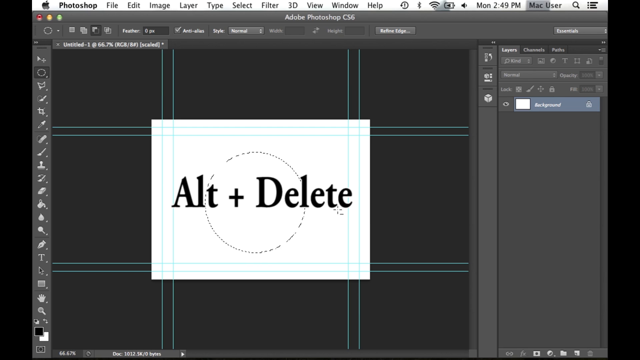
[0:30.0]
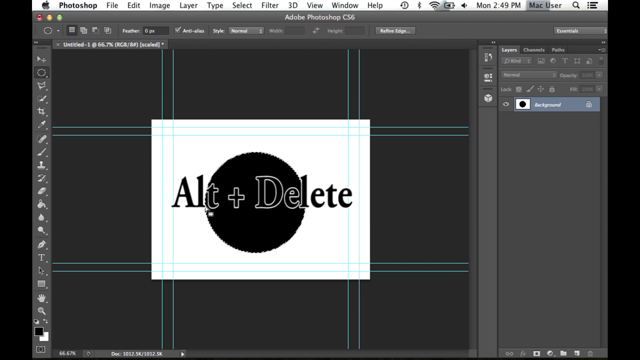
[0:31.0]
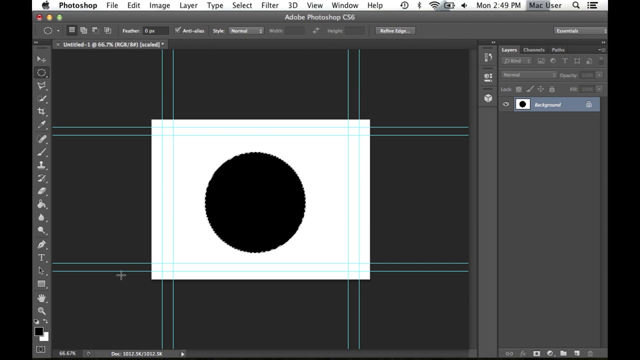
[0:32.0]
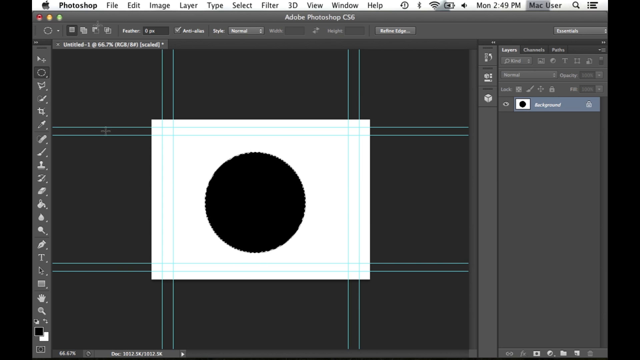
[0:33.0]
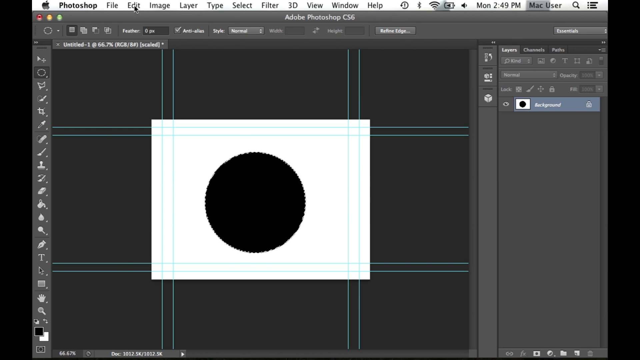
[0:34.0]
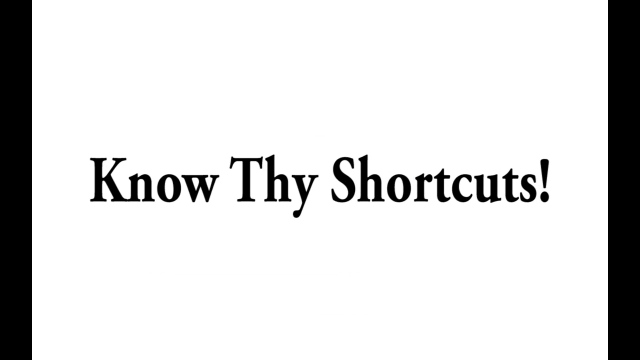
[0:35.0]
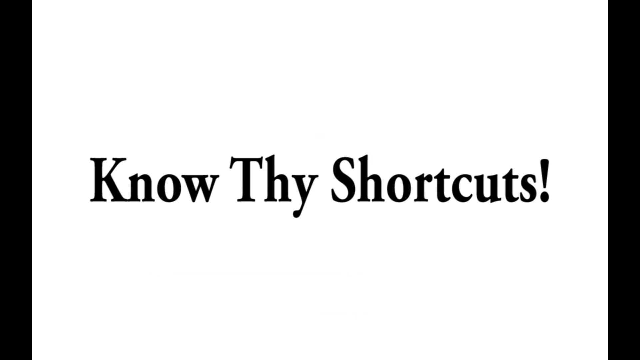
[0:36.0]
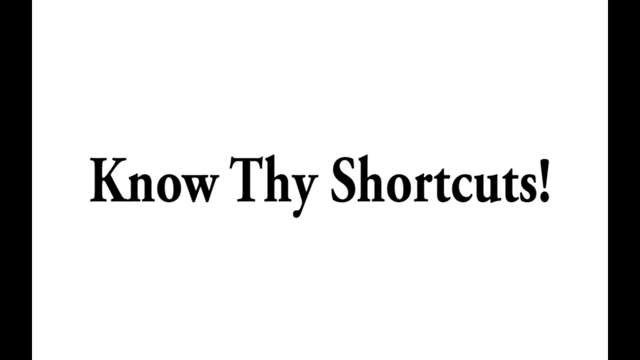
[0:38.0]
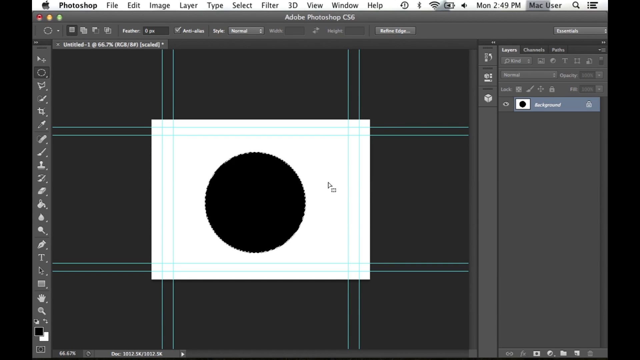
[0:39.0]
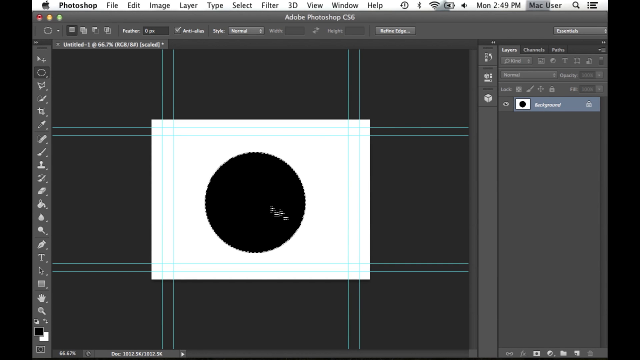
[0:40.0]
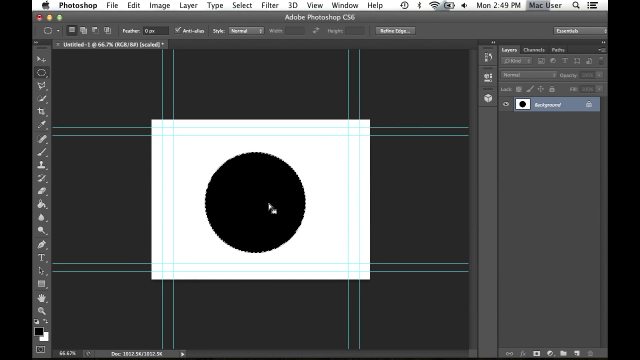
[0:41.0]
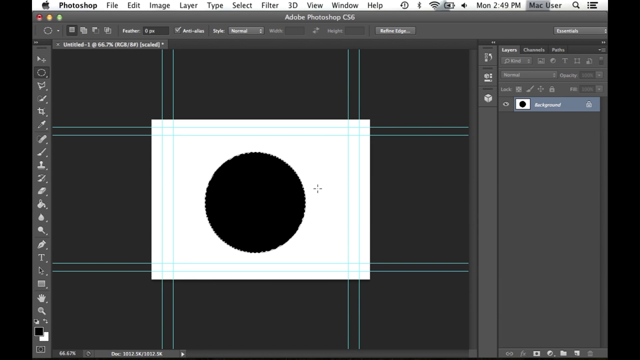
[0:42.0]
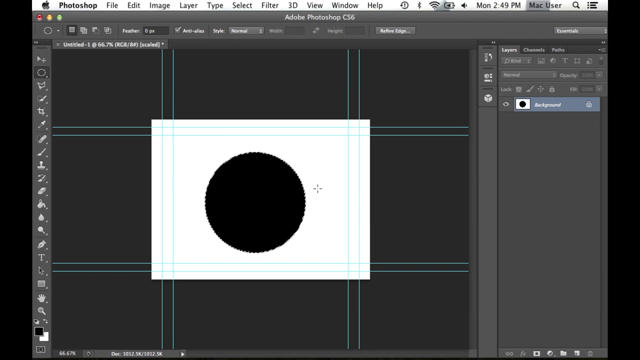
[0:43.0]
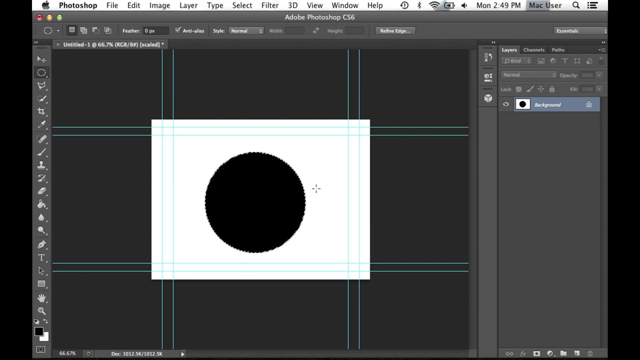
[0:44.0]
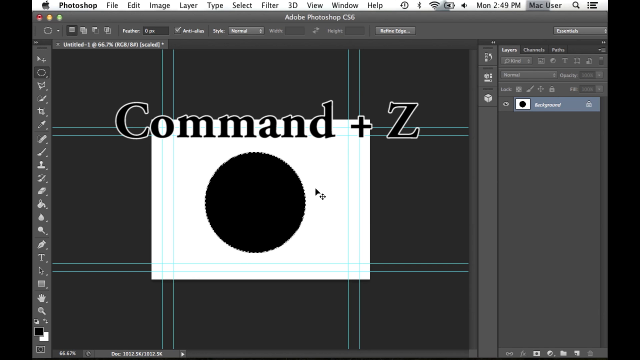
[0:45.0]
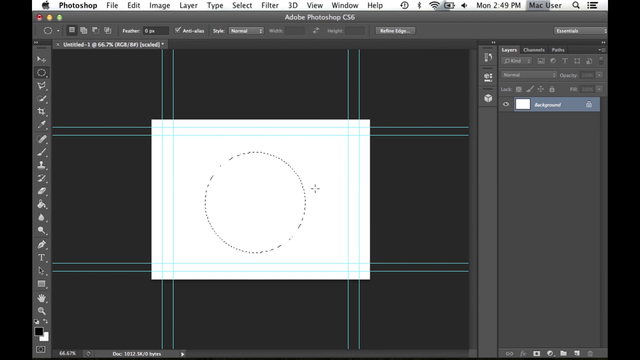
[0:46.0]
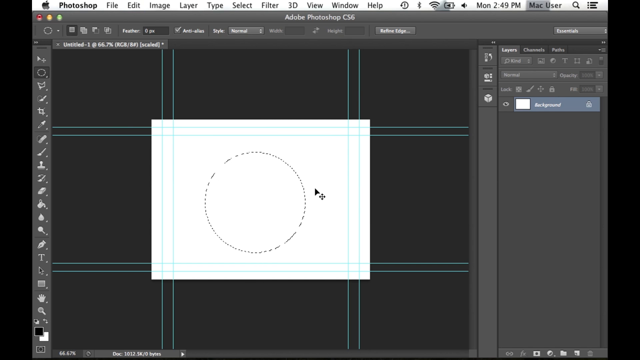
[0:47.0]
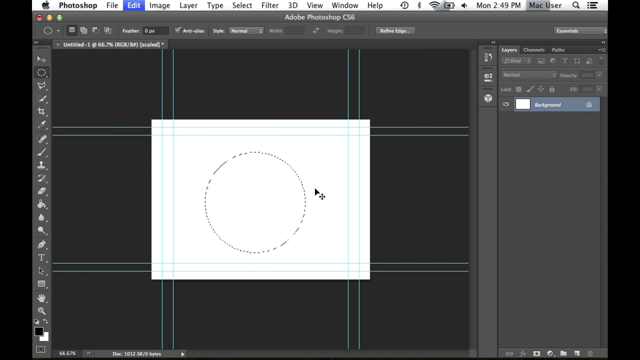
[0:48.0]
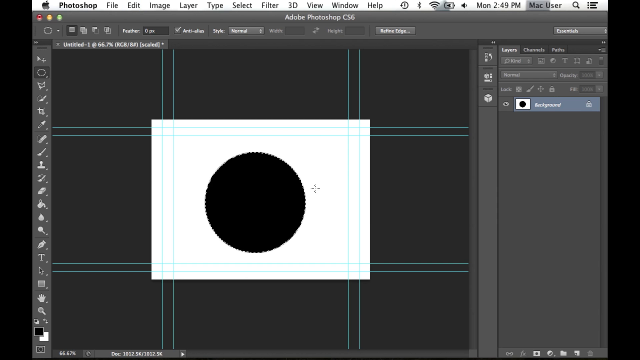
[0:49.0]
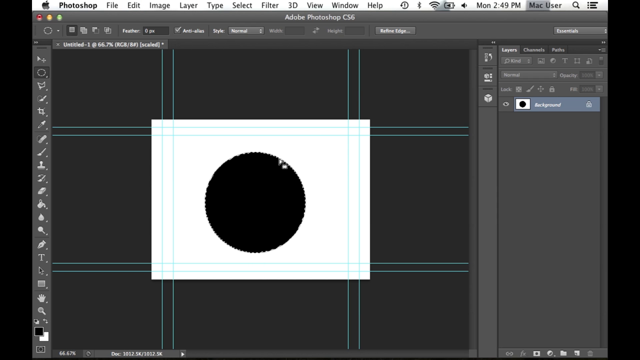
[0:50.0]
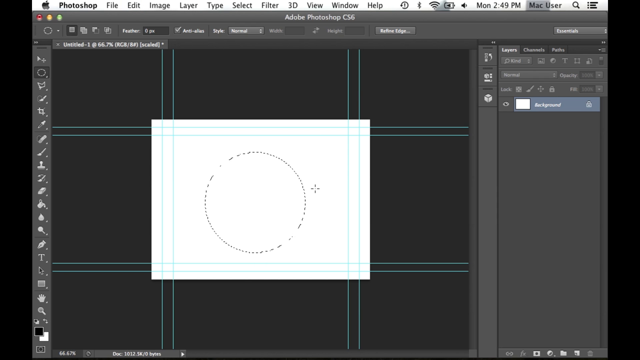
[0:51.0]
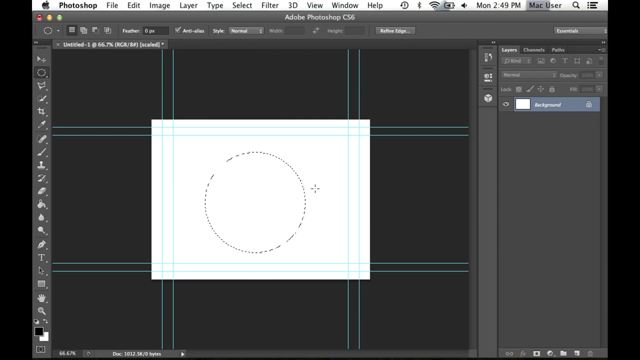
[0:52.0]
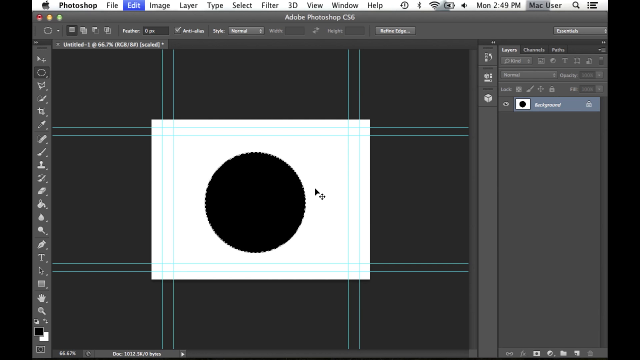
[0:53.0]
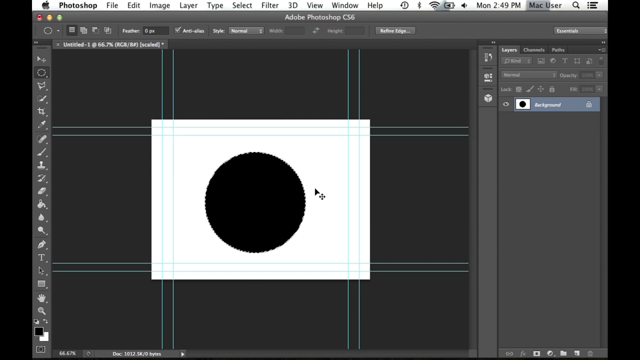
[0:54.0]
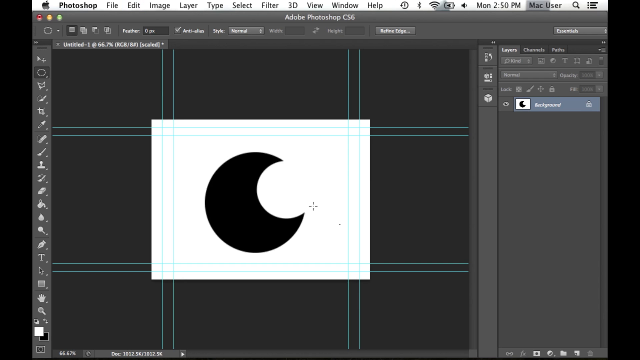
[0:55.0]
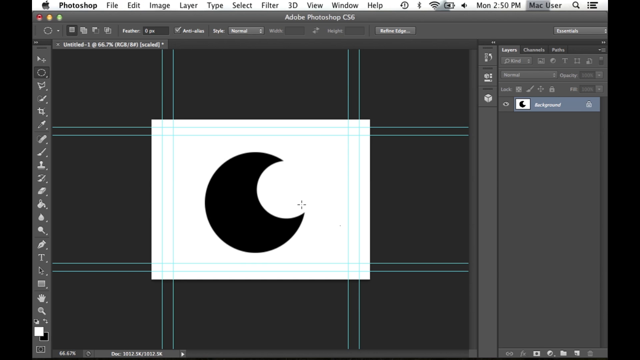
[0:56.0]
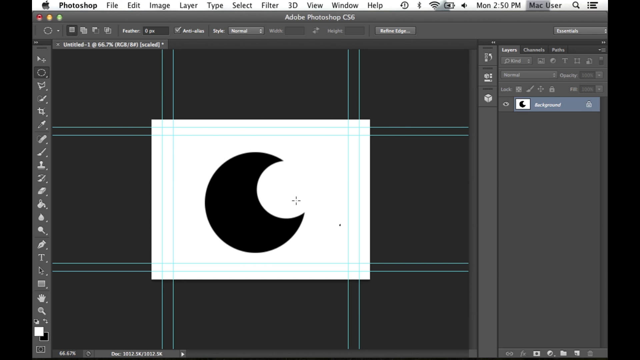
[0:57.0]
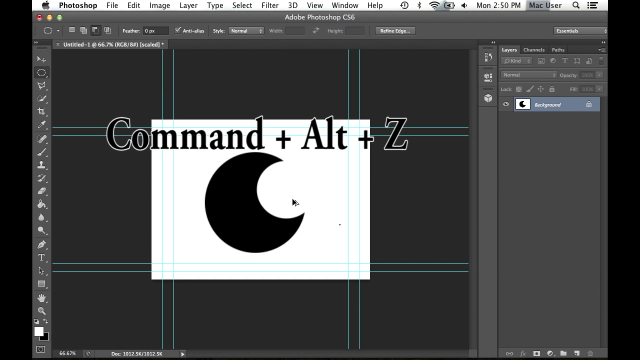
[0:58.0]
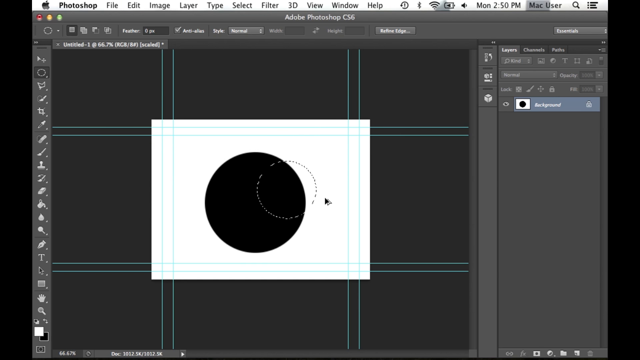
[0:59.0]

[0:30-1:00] The video is a little wider than it is tall, with the left and right letterboxed by around 5% each, maybe a little more. It shows the desktop of an Apple computer running macOS. In the upper left-hand corner is an Apple icon followed by "Photoshop", then the menu options File, Edit, Image, Layer, Type, Select, Filter, 3D, View, Window and Help. Below is the typical Photoshop layout, with the tool options along the left in pictorial form. The main area is divided into what looks like a 3x3 grid separated by green lines. In the very center is a white work area, and on top of it is text in black lettering with a white outline reading "Alt plus Delete", along with a big black dot, almost like a black sun placed in the middle. The words are then deleted, and the desktop switches back to a white background that says "Know thy shortcuts".